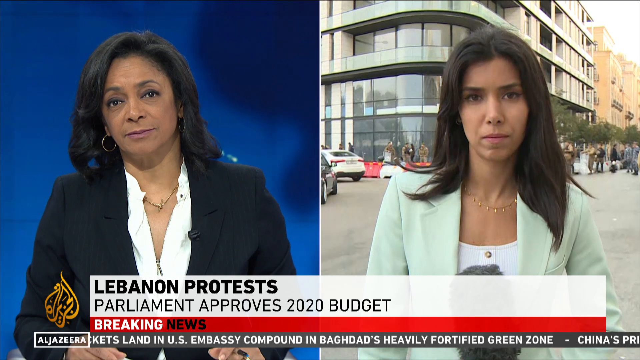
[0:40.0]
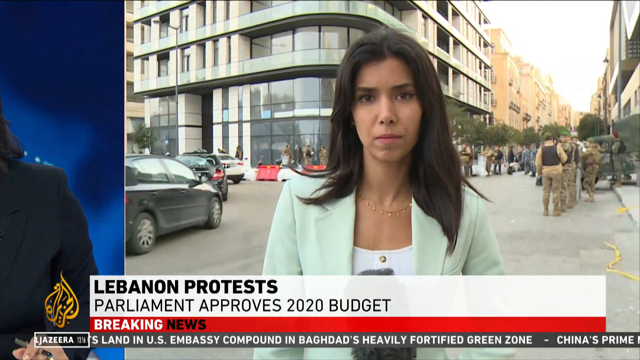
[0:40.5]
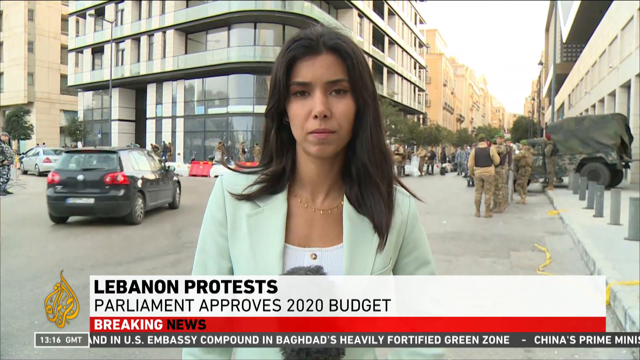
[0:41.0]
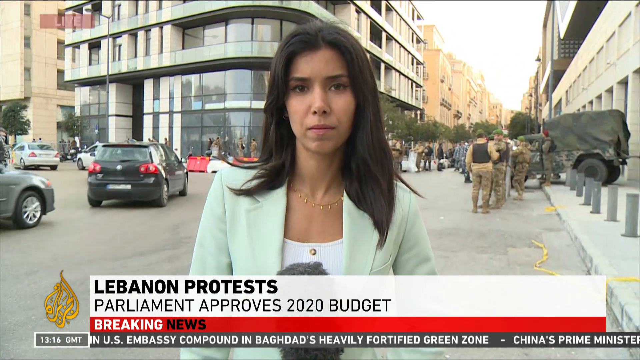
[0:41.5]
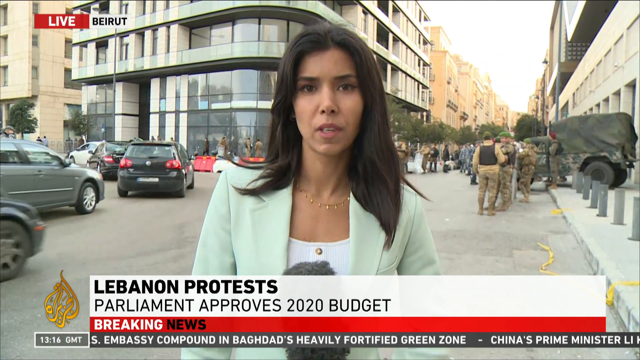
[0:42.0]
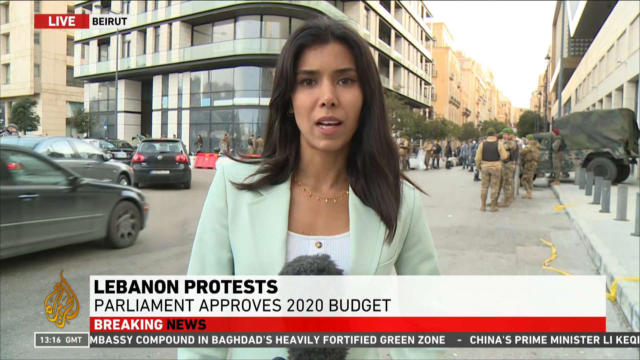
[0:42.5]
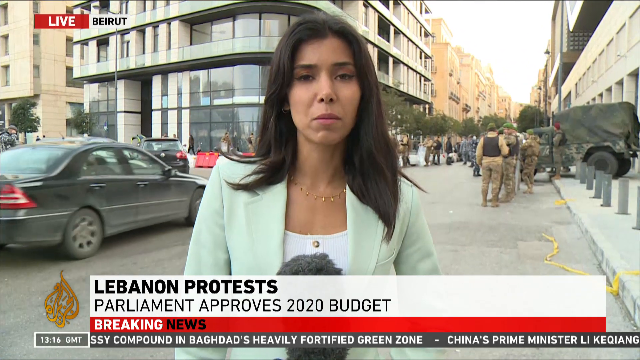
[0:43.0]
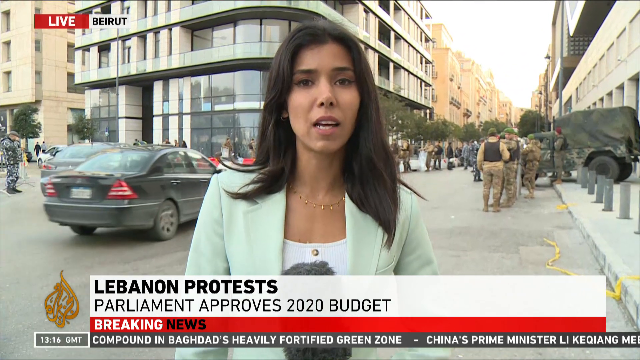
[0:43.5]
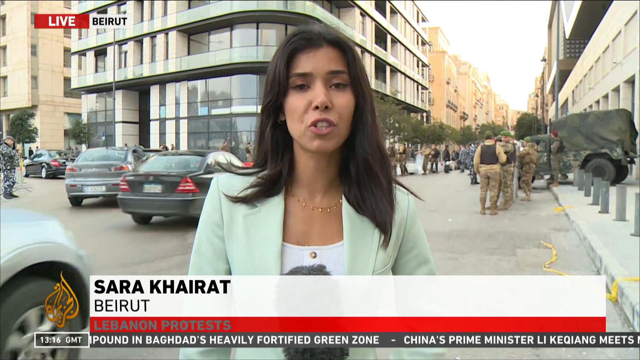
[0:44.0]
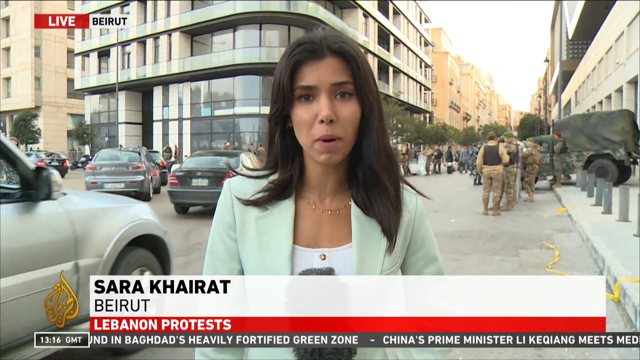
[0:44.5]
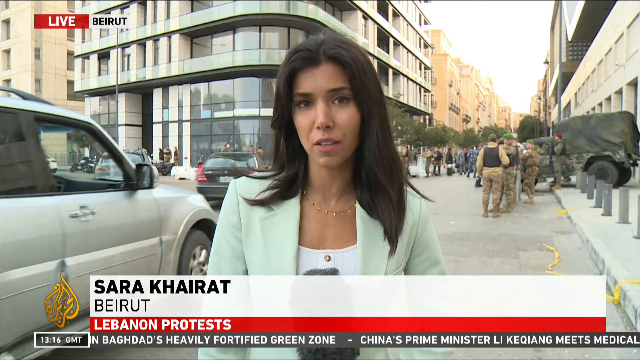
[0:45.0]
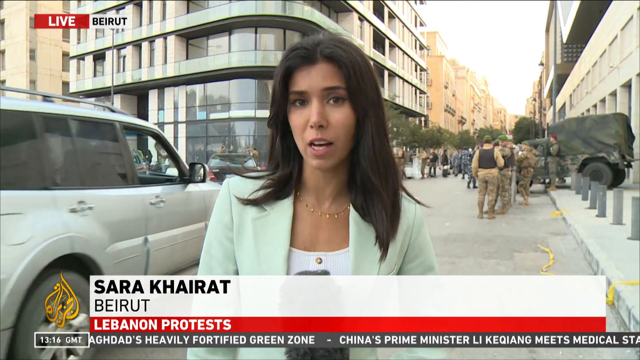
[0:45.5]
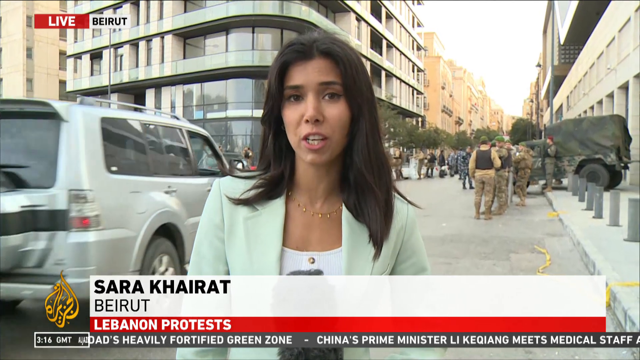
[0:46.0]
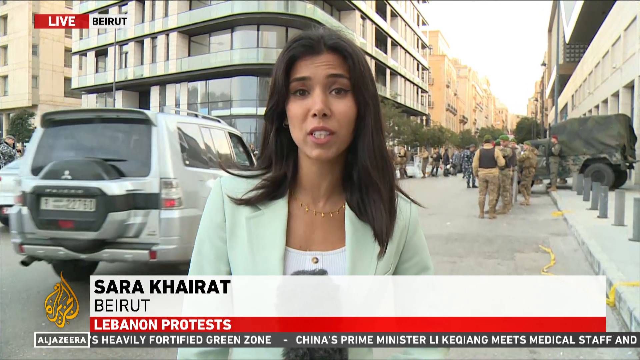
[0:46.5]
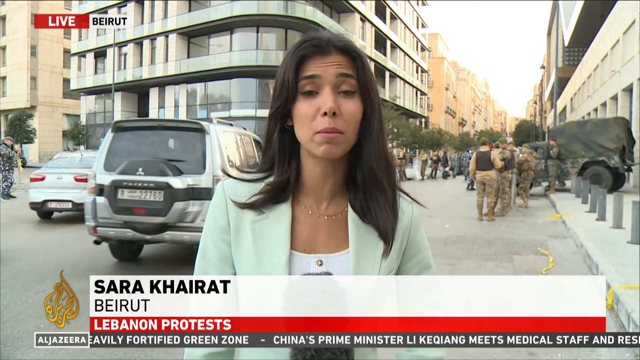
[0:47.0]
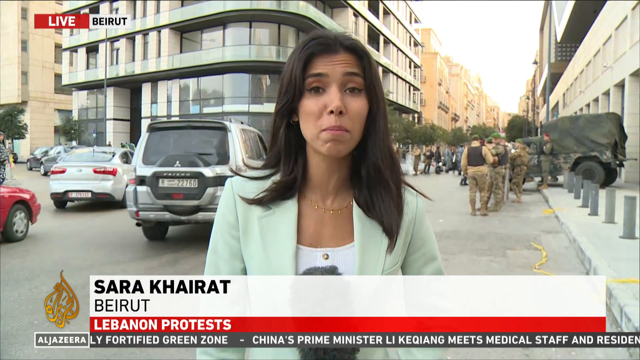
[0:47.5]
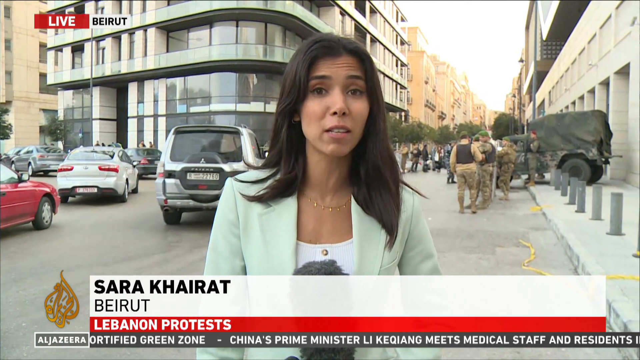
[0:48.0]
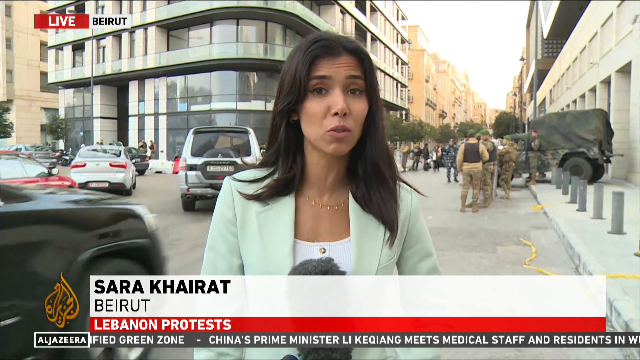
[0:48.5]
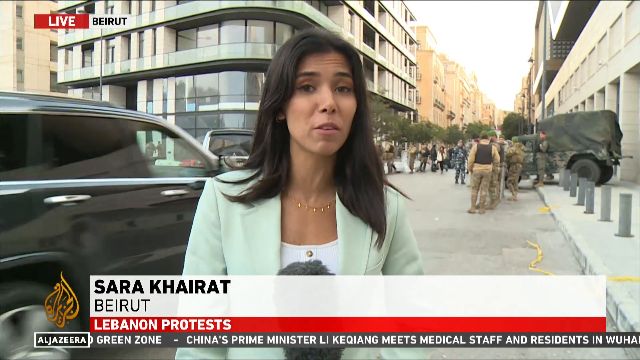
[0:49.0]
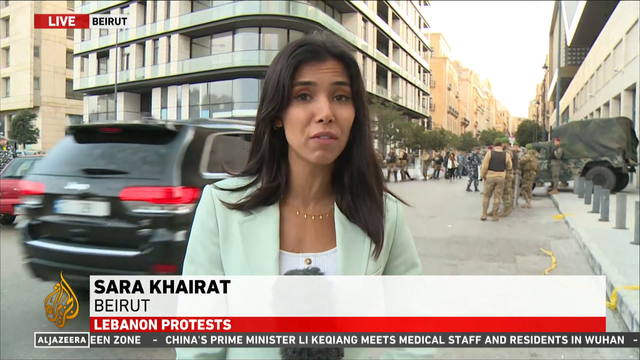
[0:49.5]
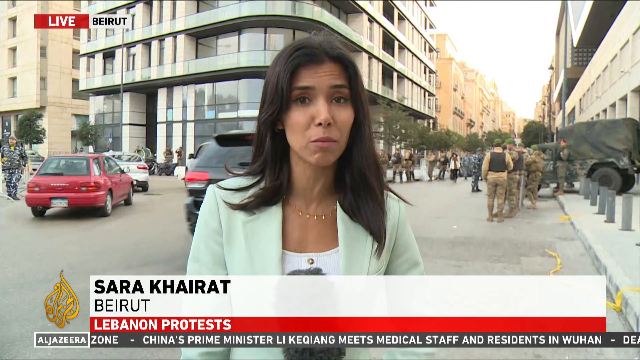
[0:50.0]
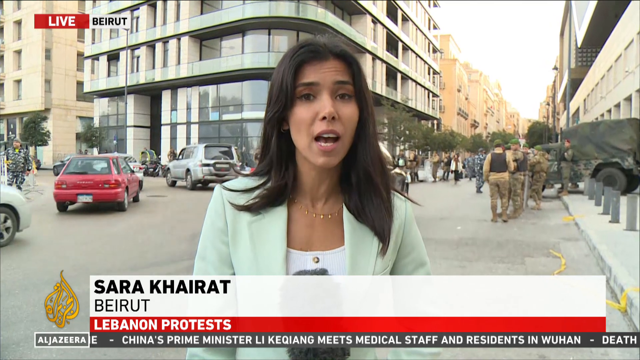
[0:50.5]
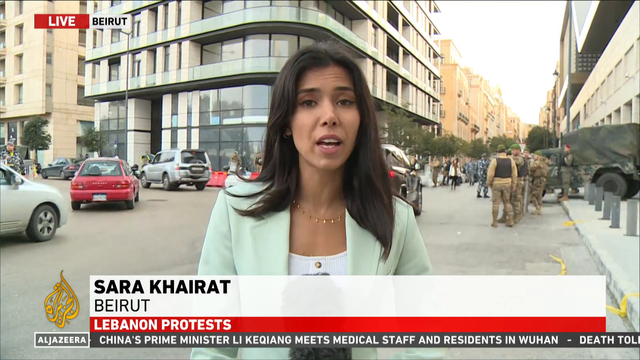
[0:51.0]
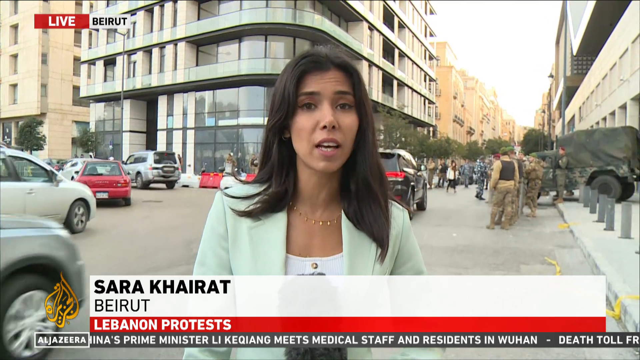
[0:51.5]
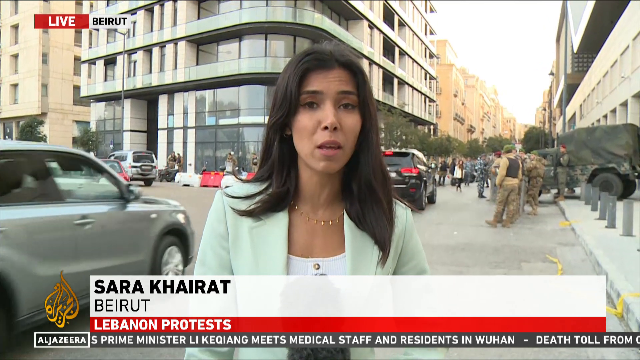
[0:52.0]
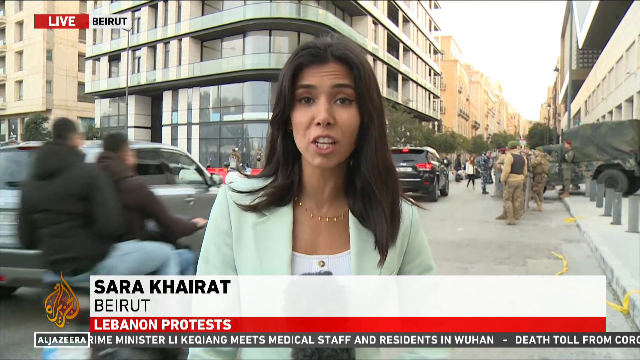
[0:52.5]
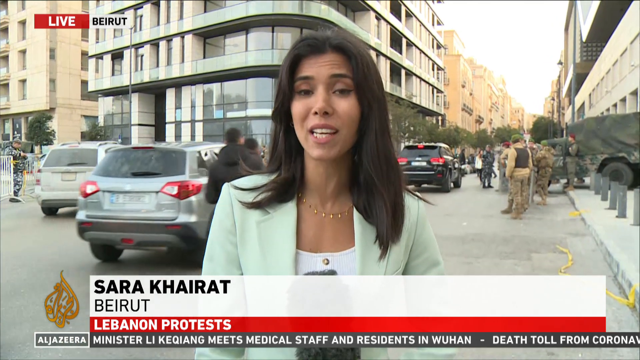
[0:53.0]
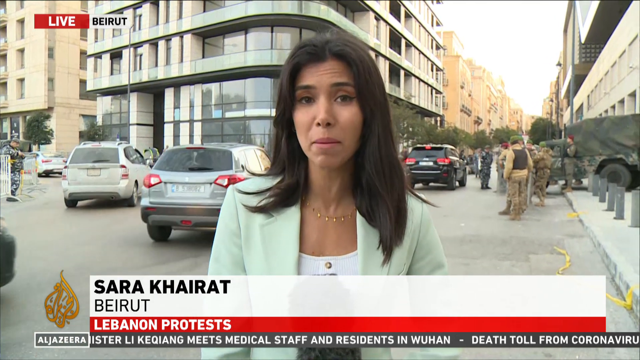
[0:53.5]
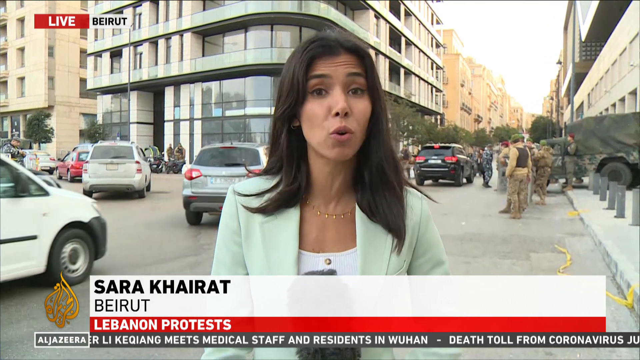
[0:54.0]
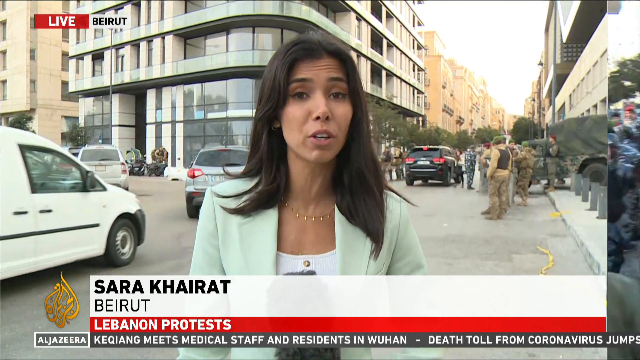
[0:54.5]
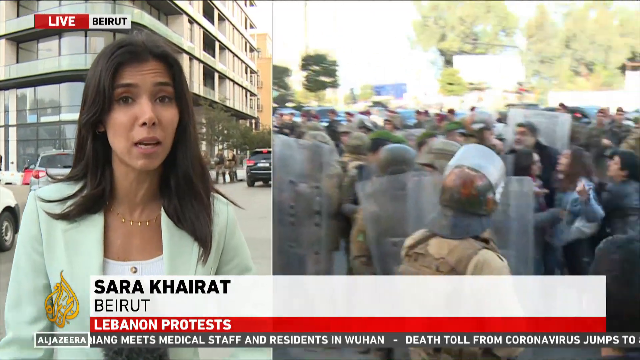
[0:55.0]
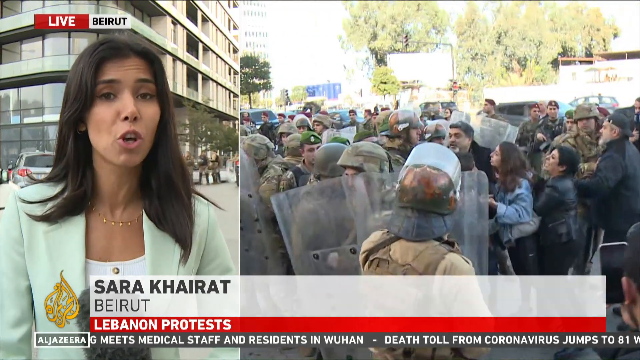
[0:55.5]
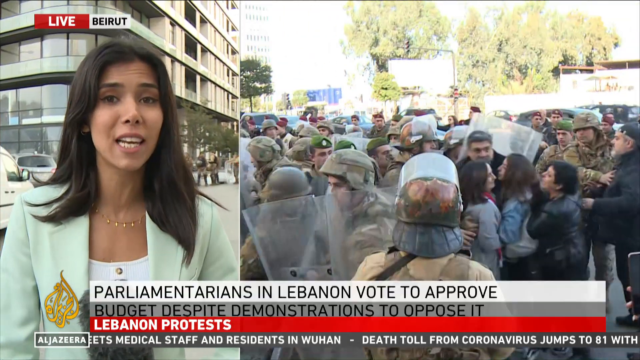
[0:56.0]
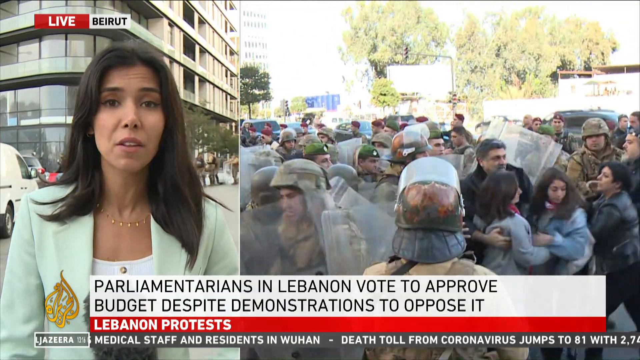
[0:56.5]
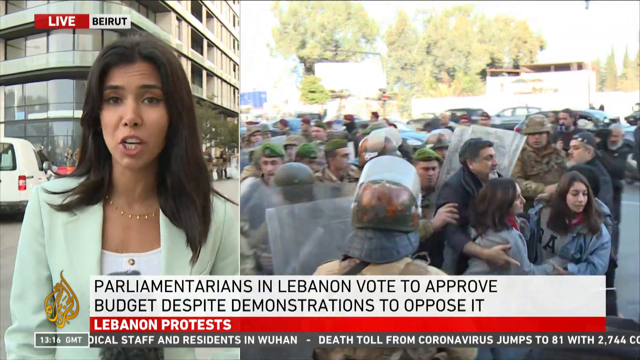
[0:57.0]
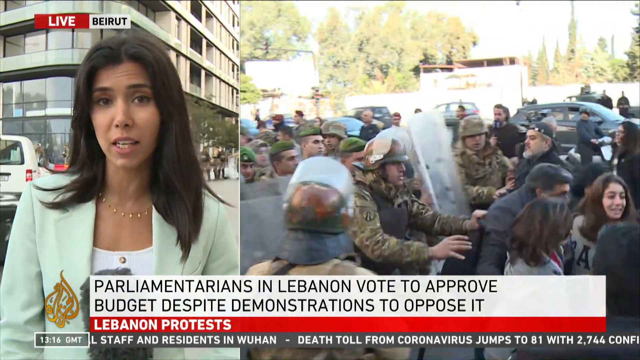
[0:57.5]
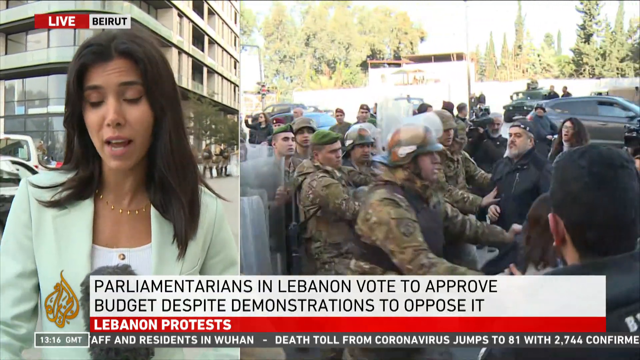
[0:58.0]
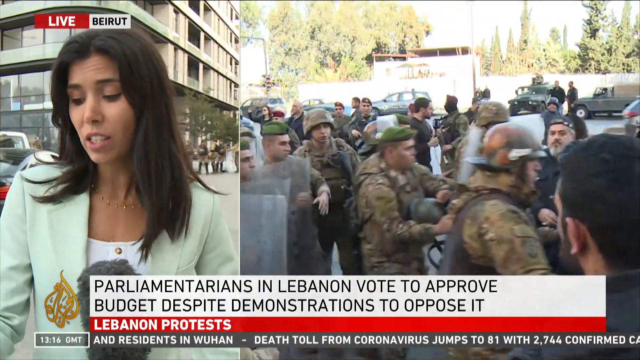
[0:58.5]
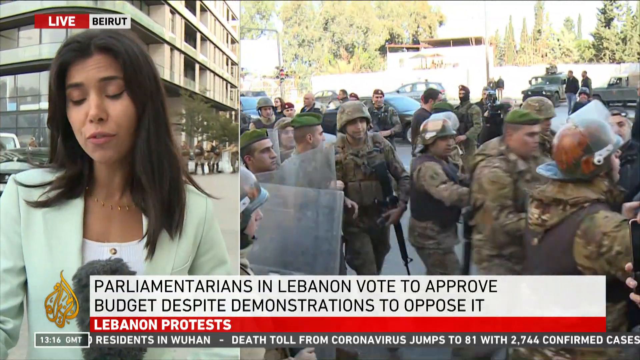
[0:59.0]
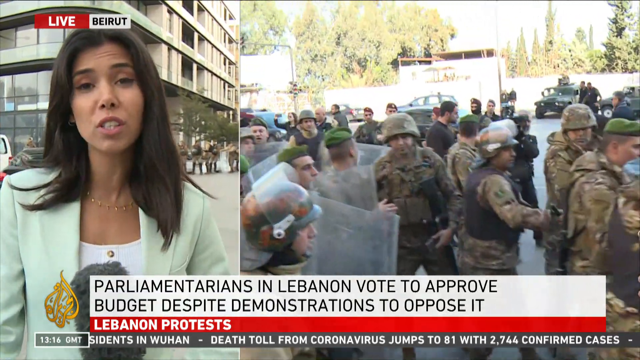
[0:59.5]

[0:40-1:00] The reporter, Sarah Caret, is in Beirut reporting on the Lebanon protests. Behind her are army officers wearing fatigues and bulletproof vests, along with army vehicles. A split screen shows military officers and police officers in riot gear fighting with protesters, perhaps trying to control them. The view returns to the reporter standing in front of the army officers and an army vehicle, with civilian cars passing. Behind her is a very large, very new-looking glass-and-steel building, and crowds of people are visible in the distance. The newscast appears to cover protests over parliamentarians in Lebanon voting to approve the budget despite demonstrations.